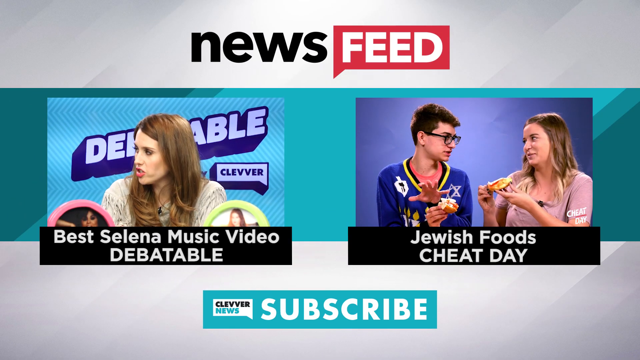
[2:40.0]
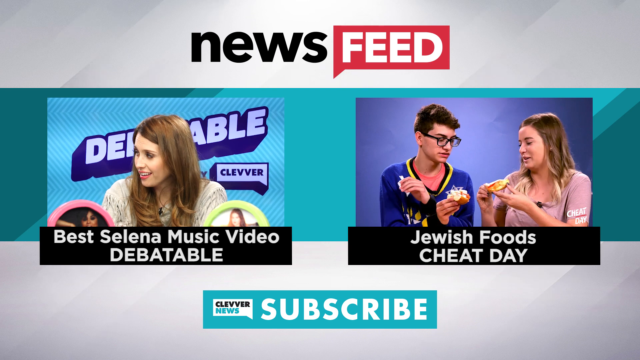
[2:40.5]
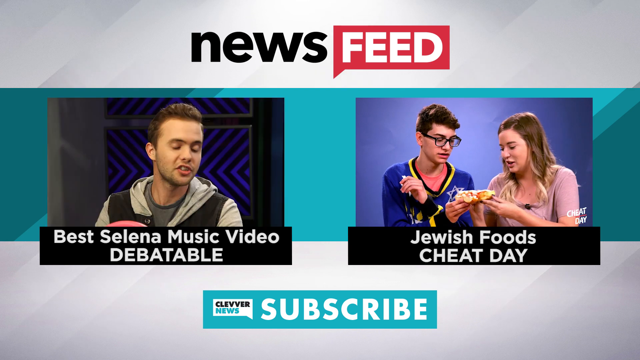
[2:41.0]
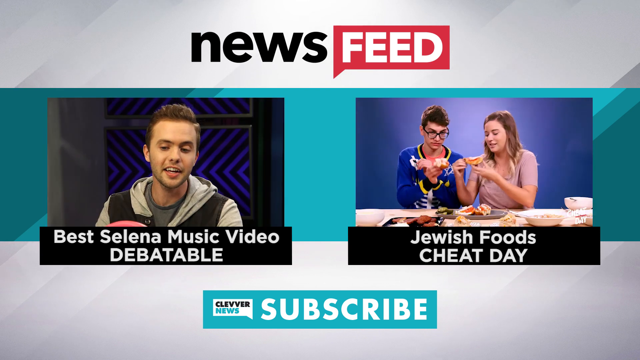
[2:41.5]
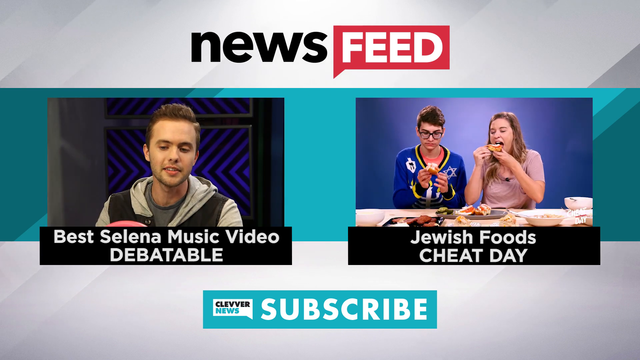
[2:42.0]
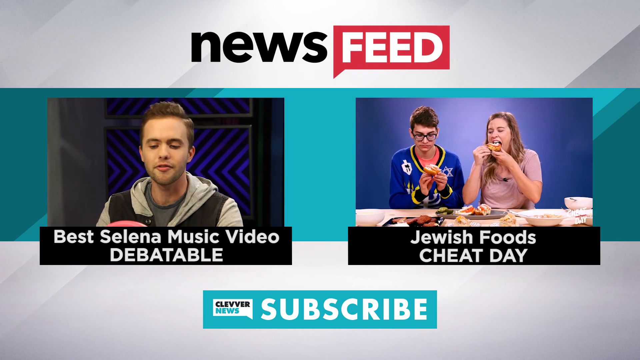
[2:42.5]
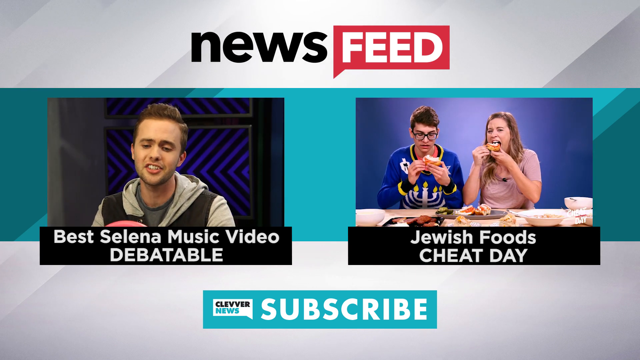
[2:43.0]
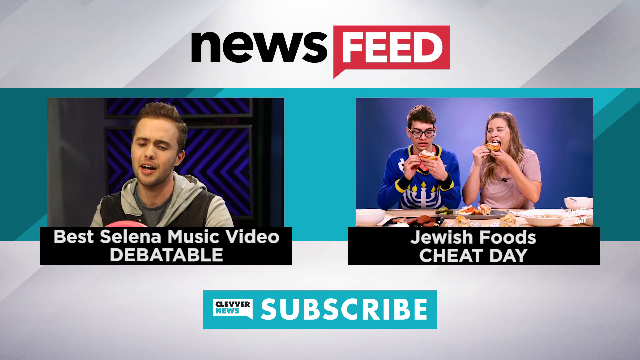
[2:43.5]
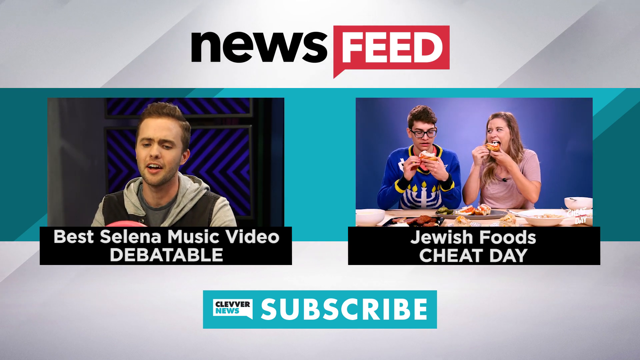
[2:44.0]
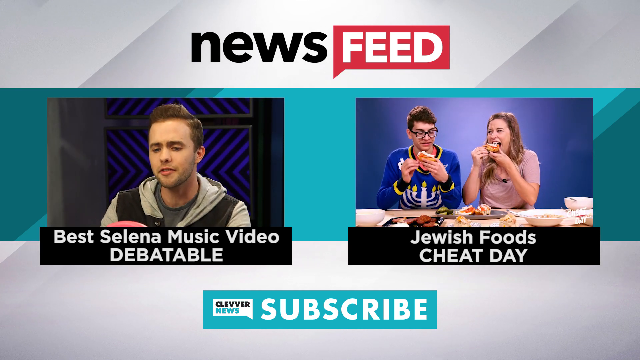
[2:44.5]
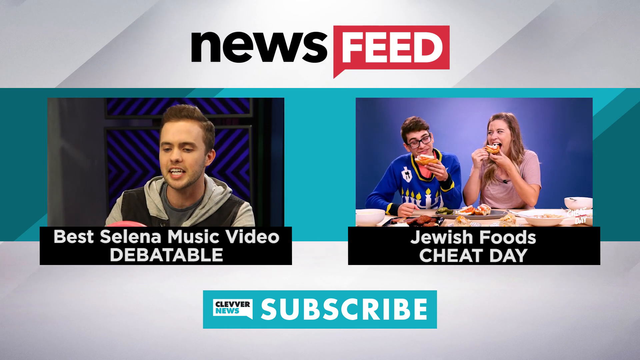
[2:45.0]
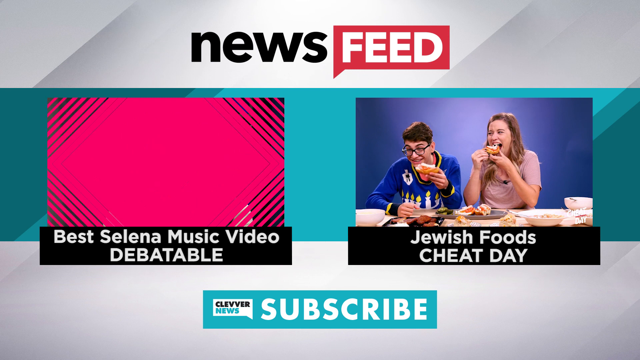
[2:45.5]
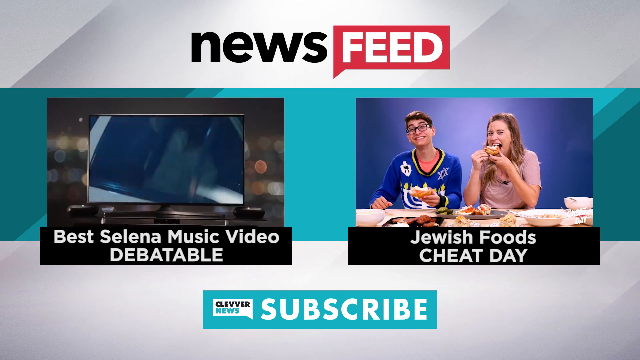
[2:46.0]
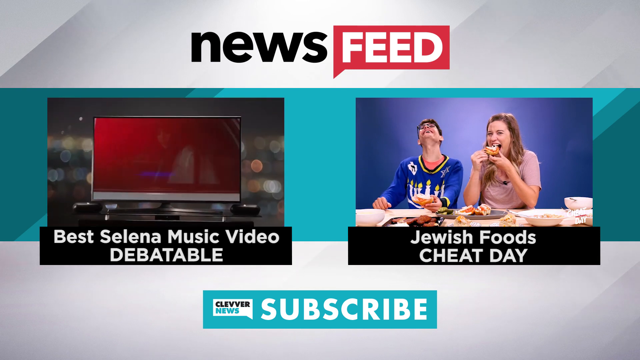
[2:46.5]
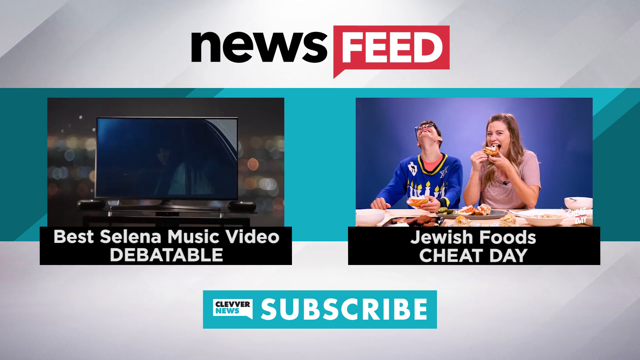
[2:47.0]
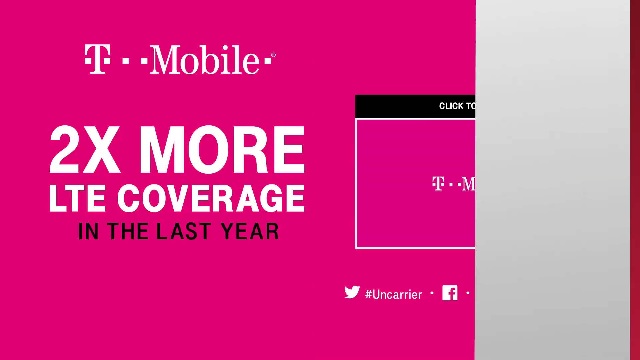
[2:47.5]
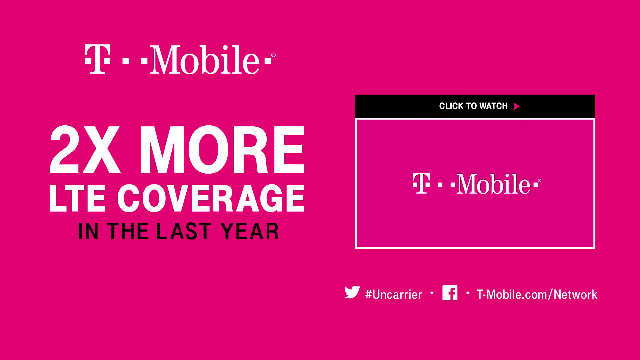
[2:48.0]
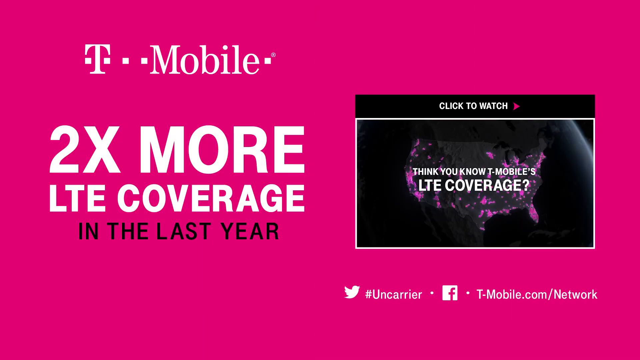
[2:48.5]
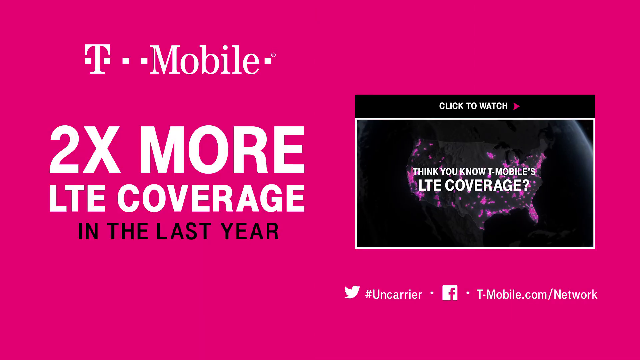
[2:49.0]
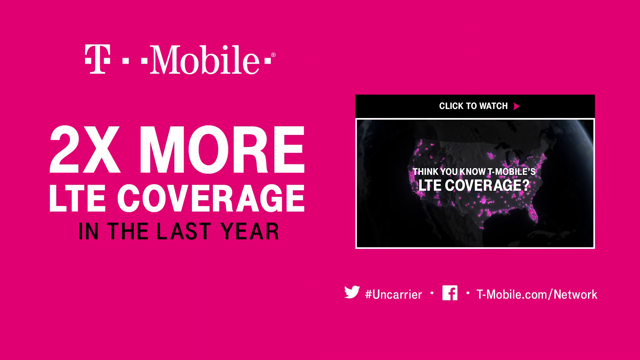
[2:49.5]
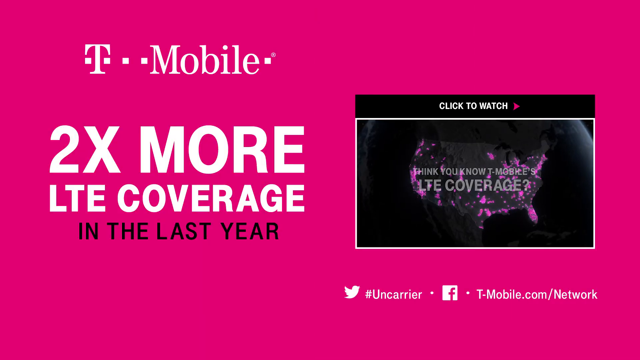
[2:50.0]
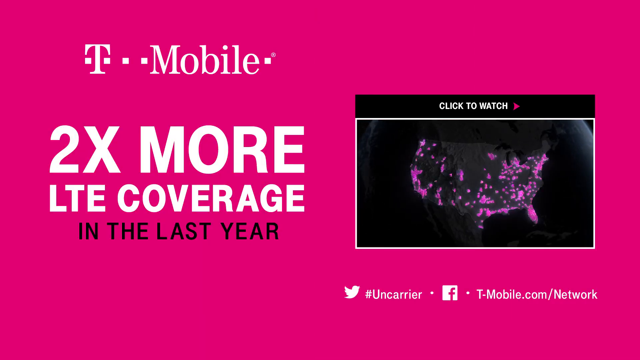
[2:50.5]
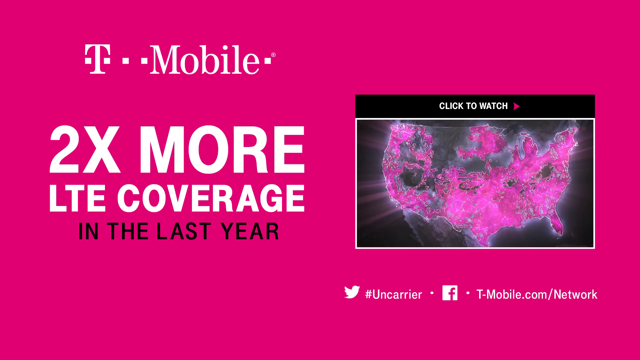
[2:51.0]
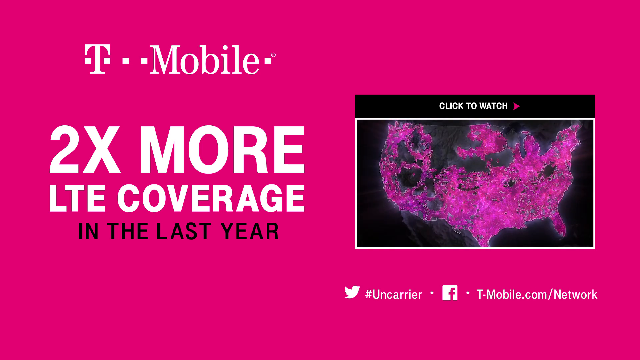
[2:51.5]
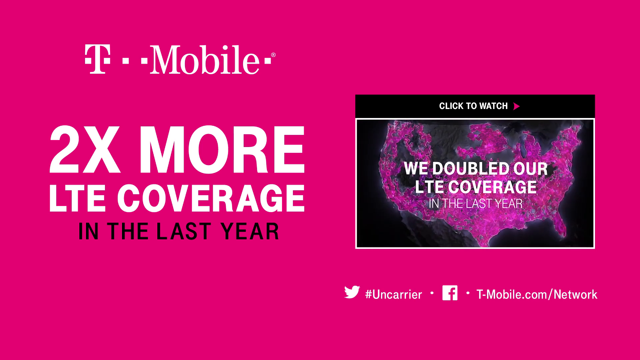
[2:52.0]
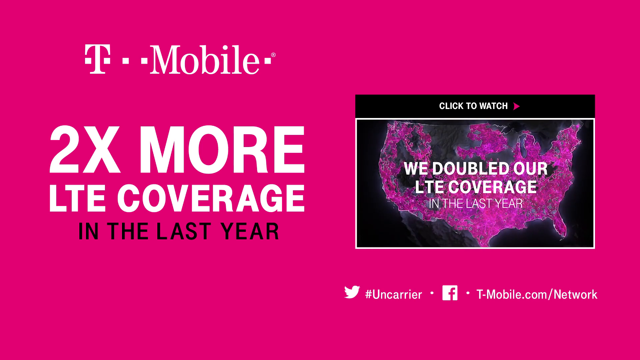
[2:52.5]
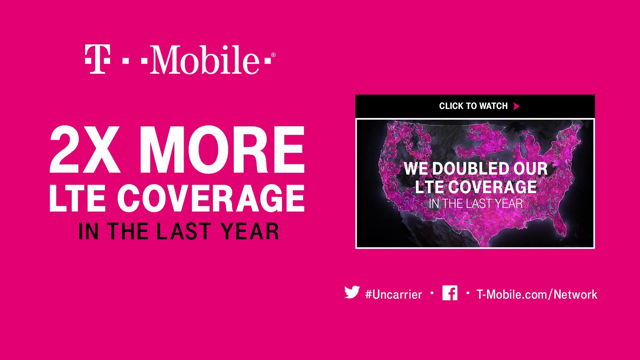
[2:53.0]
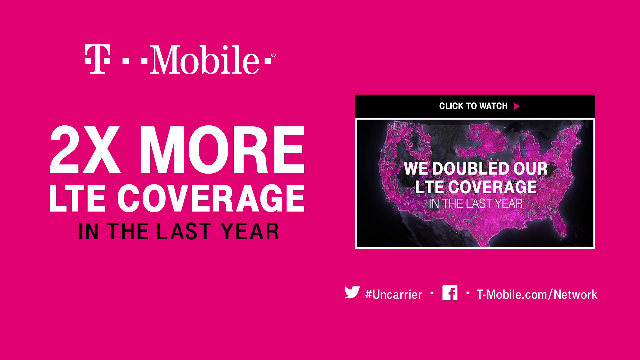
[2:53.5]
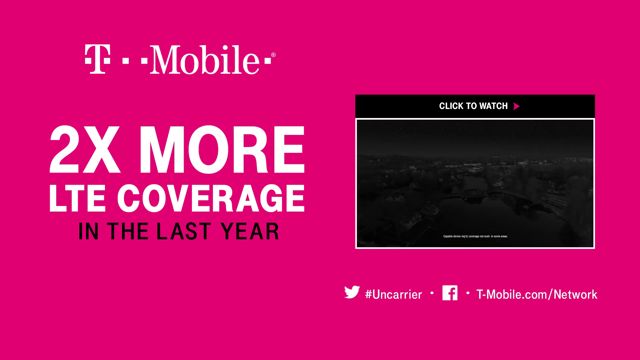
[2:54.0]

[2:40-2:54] An end screen for a show called News Feed, possibly a YouTube channel, appears. At the top, on a white header, is the word "news" in bold black text and "feed" in bold white text on a red background. Beneath are two images. On the left are the words "best Selena music video debatable", with a young woman with dark brown hair above them. On the right are the words "Jewish foods cheat day", with two young people: the man on the left is holding what might be a Jewish star, and the woman on the right looks to be eating a slice of pizza. Both are Caucasian and look to be in their late 20s. Below them, centered, is a blue subscribe button.